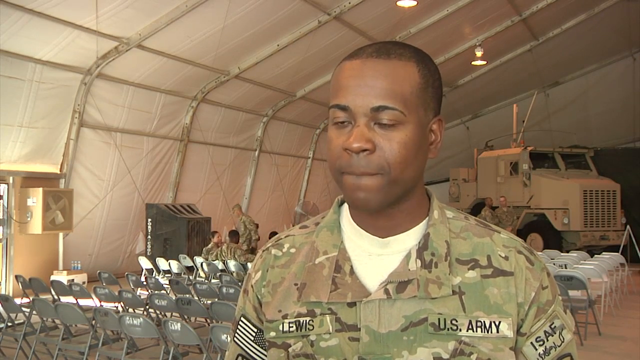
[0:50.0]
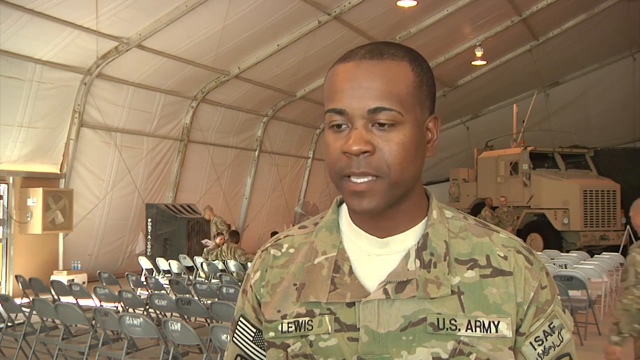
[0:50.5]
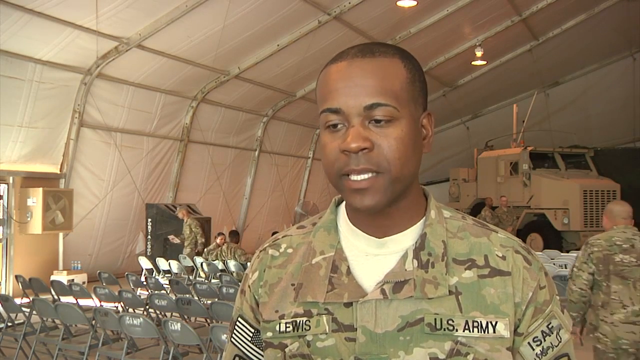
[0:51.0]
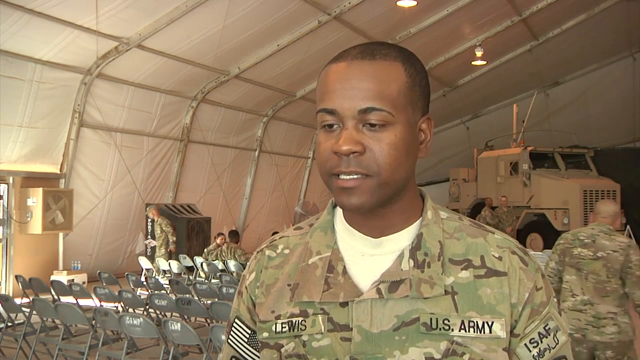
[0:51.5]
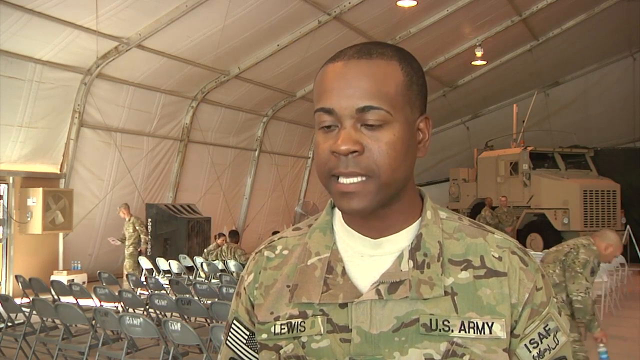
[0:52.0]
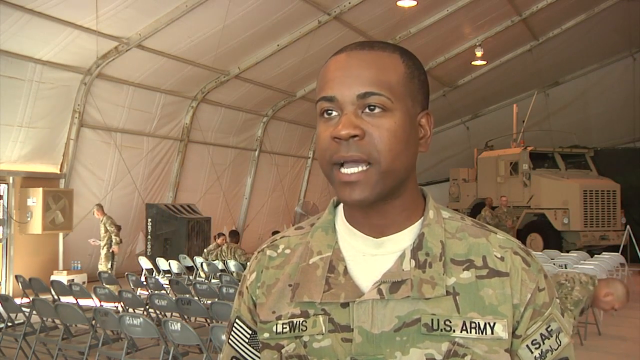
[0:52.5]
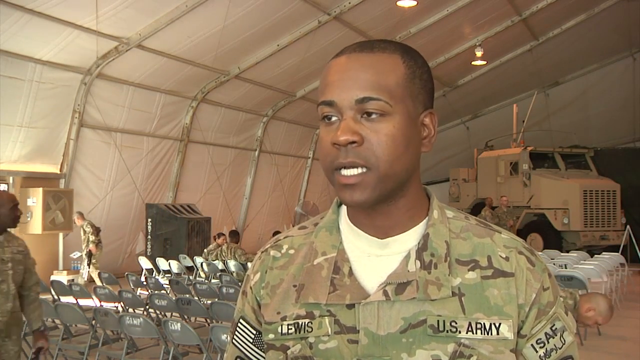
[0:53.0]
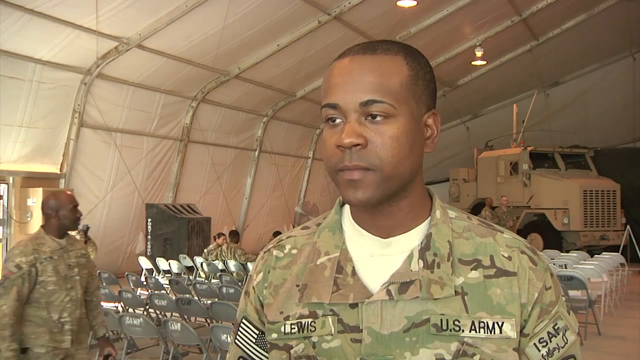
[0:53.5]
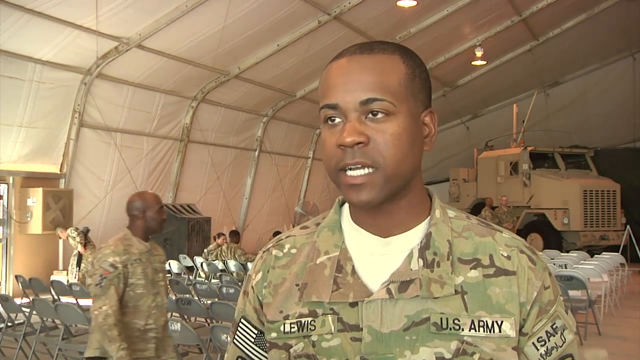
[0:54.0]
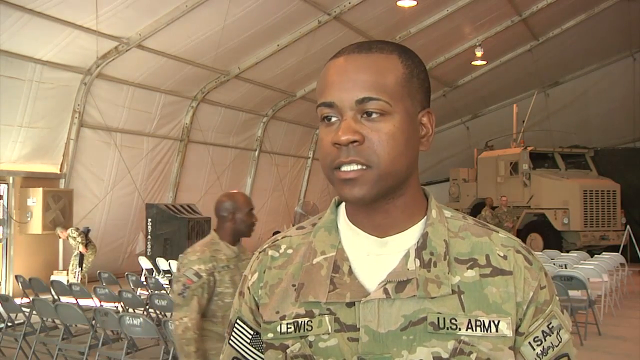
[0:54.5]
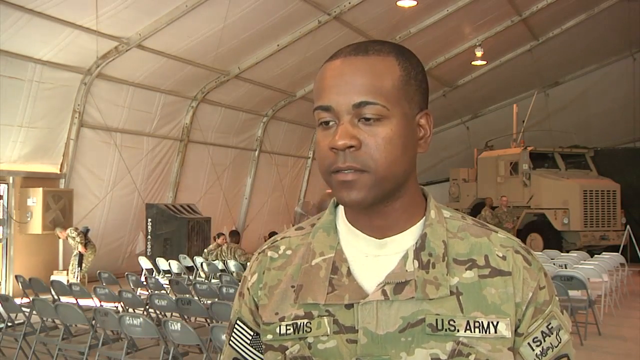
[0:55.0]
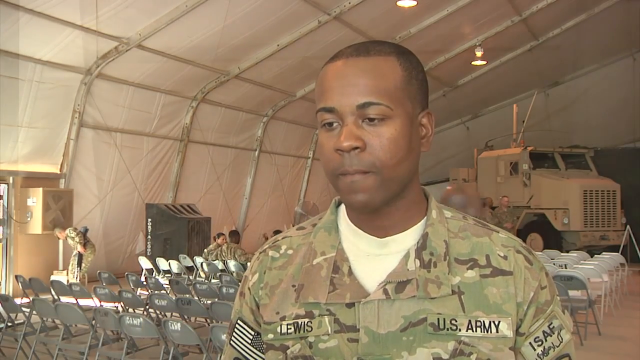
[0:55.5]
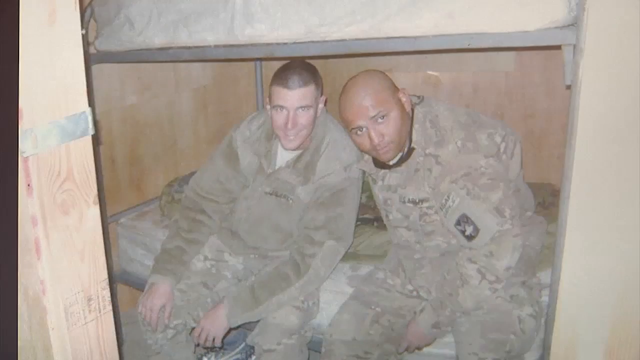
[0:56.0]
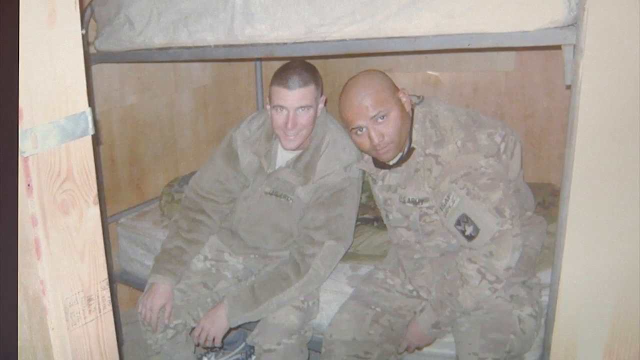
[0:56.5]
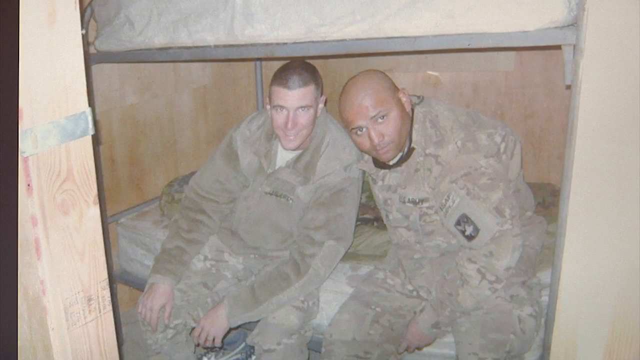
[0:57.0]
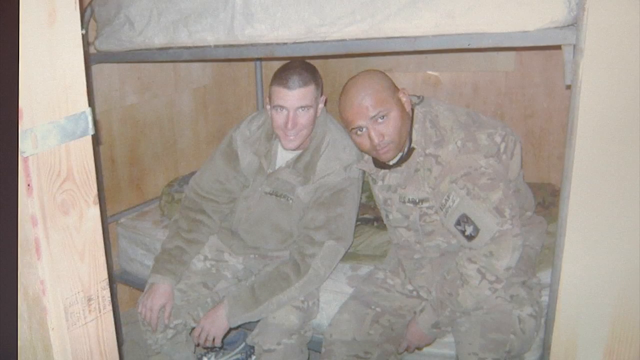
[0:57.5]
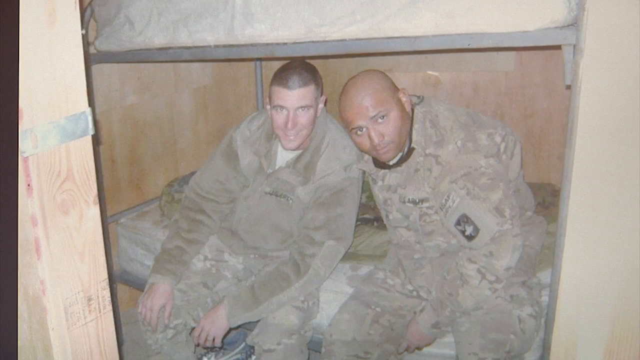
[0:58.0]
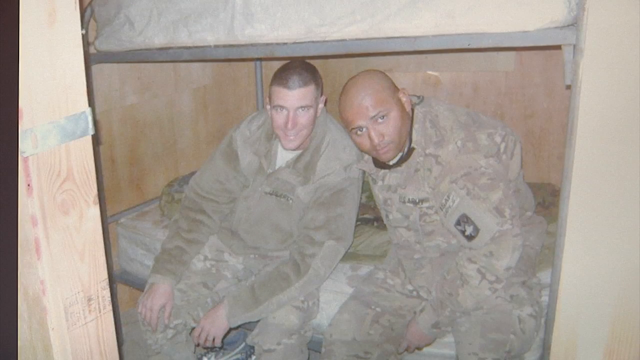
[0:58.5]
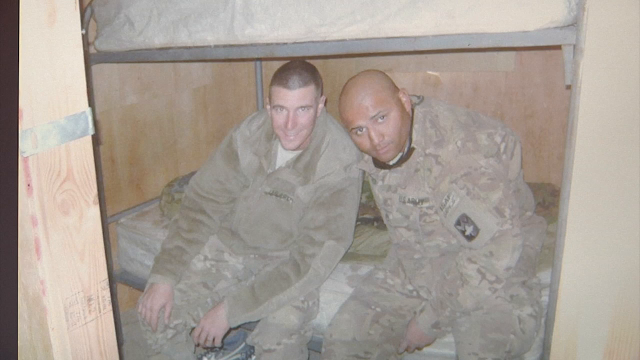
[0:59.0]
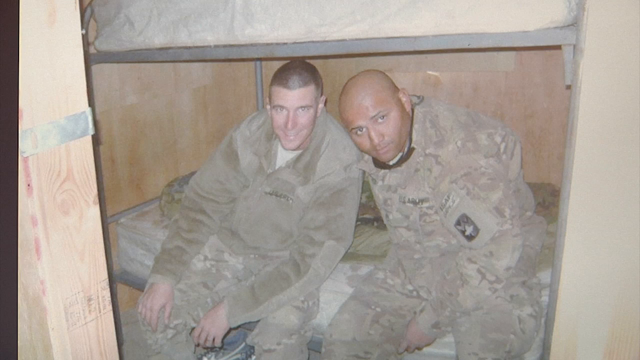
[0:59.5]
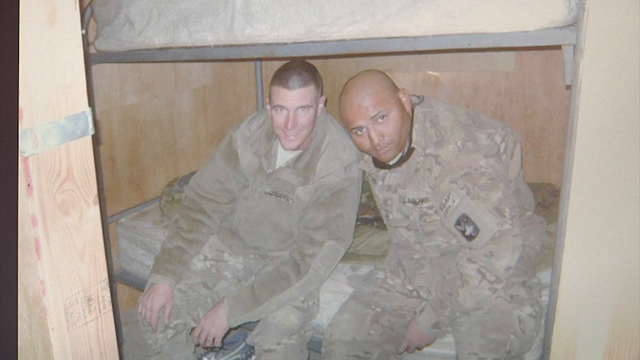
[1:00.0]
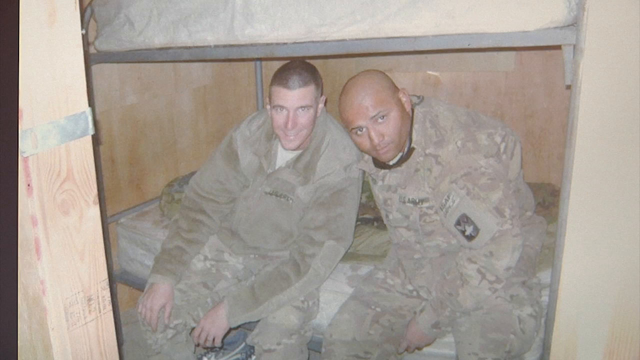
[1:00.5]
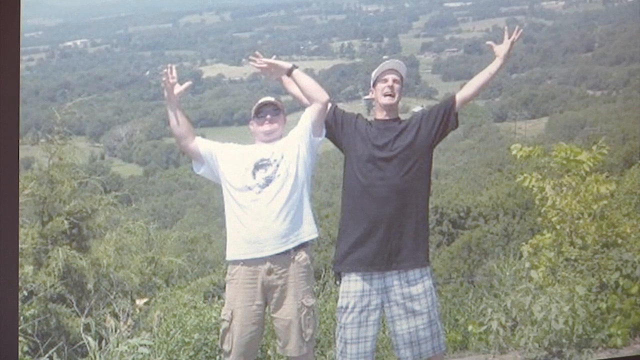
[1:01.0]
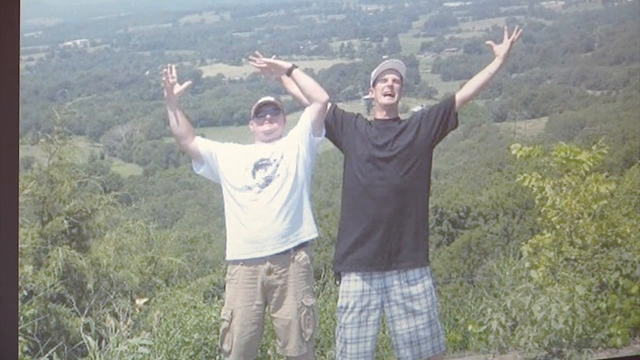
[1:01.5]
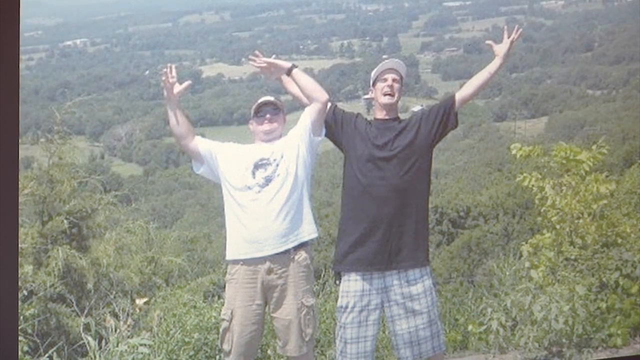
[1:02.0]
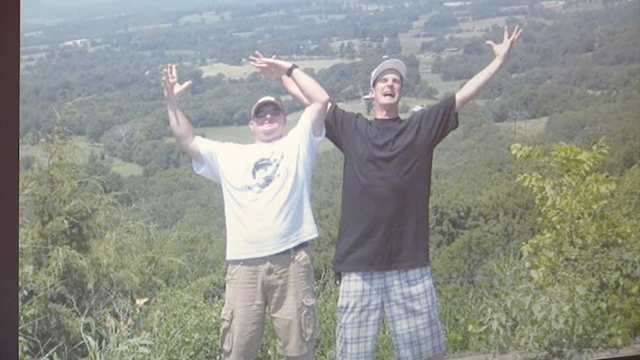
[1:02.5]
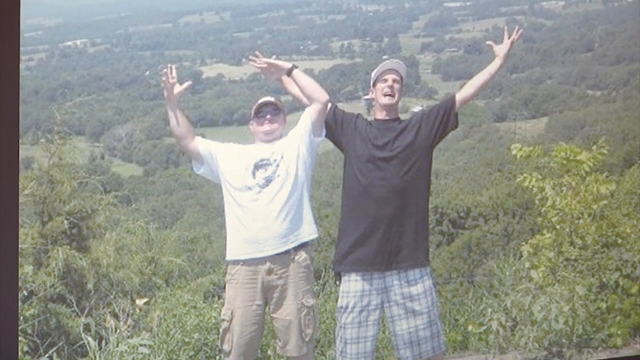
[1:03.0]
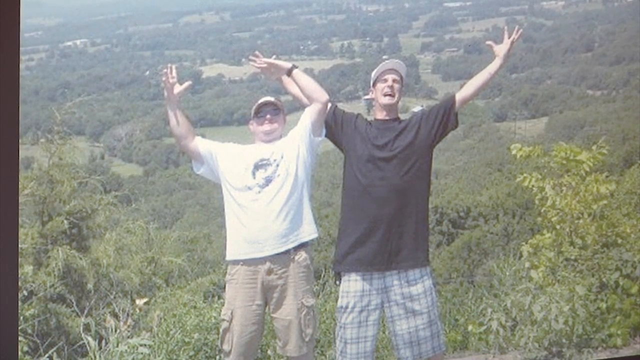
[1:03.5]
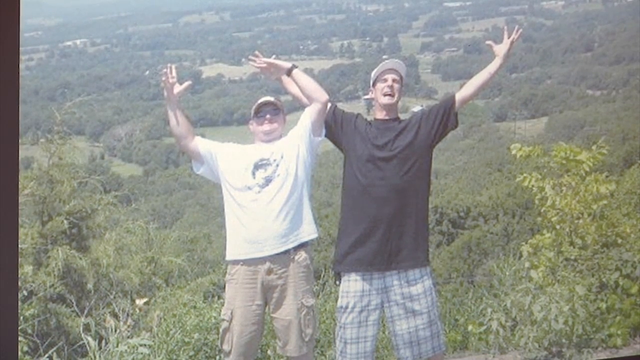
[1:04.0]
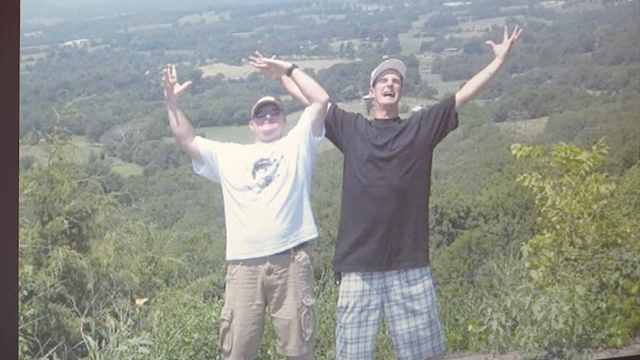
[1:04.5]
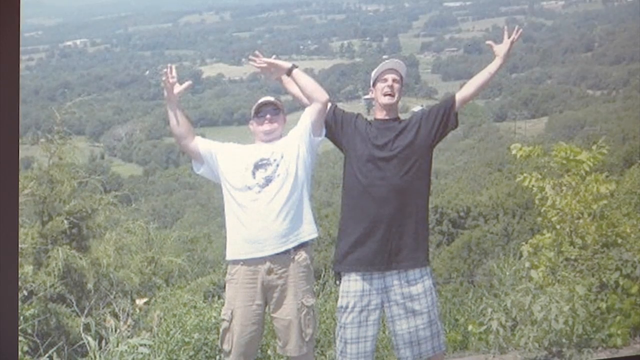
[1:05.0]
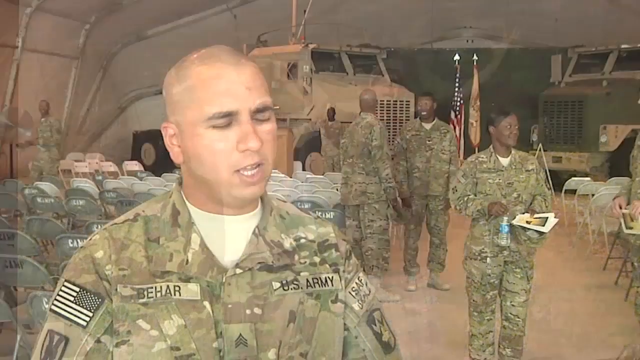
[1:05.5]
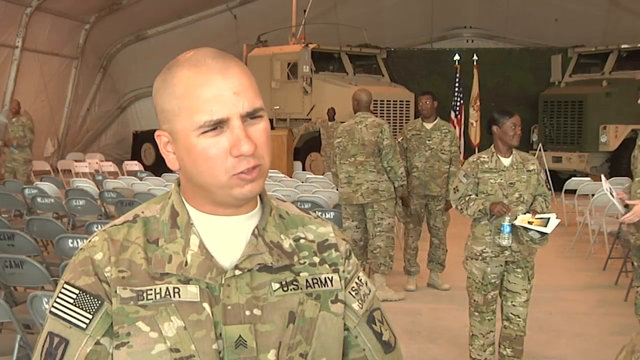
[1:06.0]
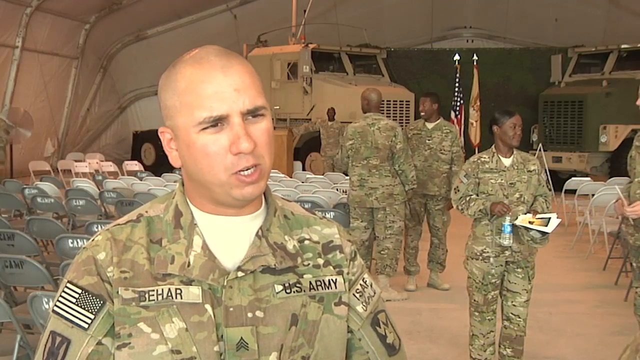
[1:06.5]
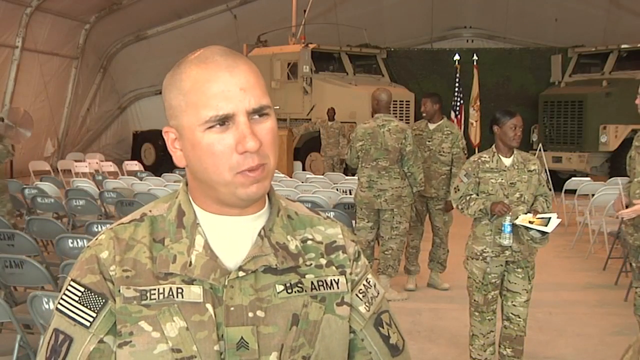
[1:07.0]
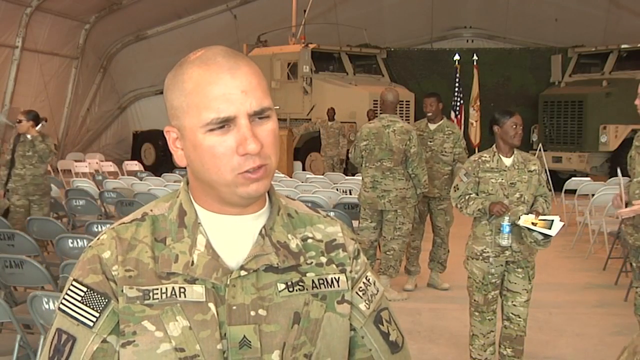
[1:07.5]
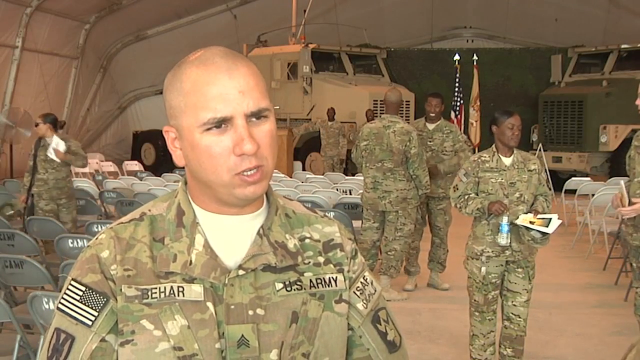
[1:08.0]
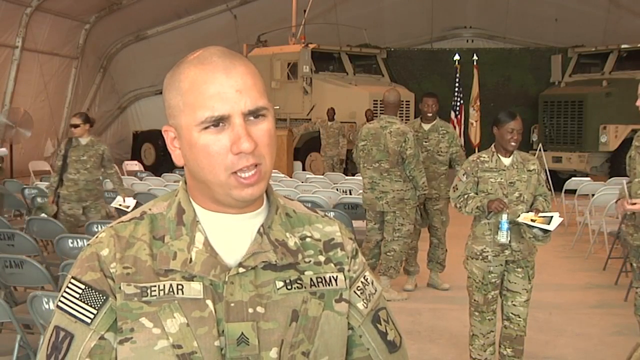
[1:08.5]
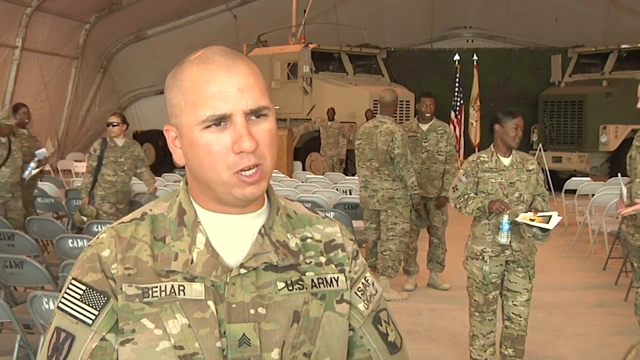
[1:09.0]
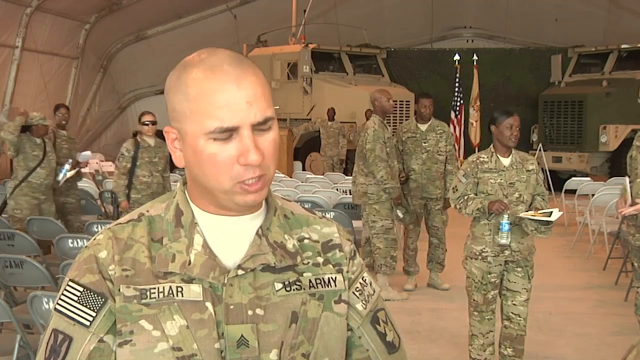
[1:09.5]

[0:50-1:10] The Black man continues talking; he has very white teeth and seems to have a good attitude but also seems a little pensive and thoughtful. He occasionally makes what appears to be eye contact with the person he is talking to, but also looks down and to the left and right as he thinks. Behind him is a Black man in profile, also in a camouflage suit. They are standing inside what looks like an equipment warehouse storage facility, a tent that looks like poles covered in canvas. The video then switches to a photograph of a white man on the left and a Black man on the right sitting on the floor with their heads leaning in towards each other; the white man is smiling and the Black man has kind of a mischievous look. Next is a picture of two white men in civilian clothes and ball caps standing on what looks like a hill, which slopes down behind them with lots of lush greenery. Both have their hands up in the air, arms spread wide over their heads, as if celebrating. Then a bald white man in a camouflage uniform and white T-shirt appears with a very serious expression. Behind him are three military people in camouflage; the one closest to the camera appears to be a woman, and the two behind her face each other and appear to be in conversation, shifting their weight from one foot to the other. On the far left, what looks like a woman, nearly in profile, is talking on a phone, which she then lowers and walks across, followed by a Black man, while the main person on screen continues to speak.